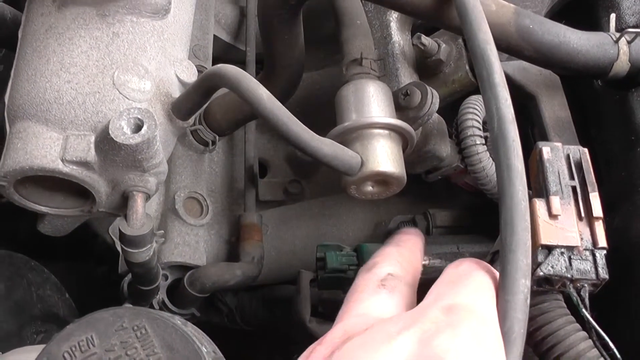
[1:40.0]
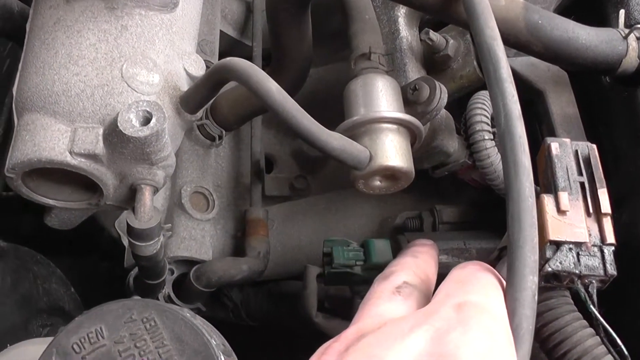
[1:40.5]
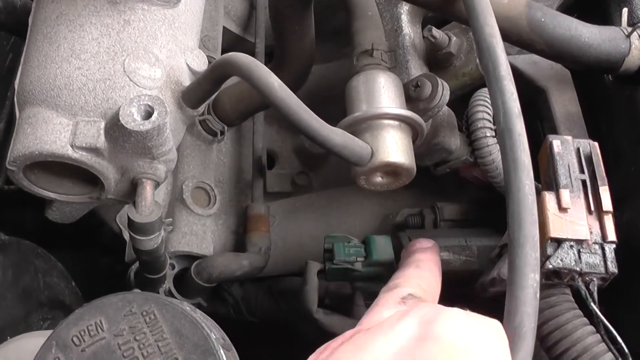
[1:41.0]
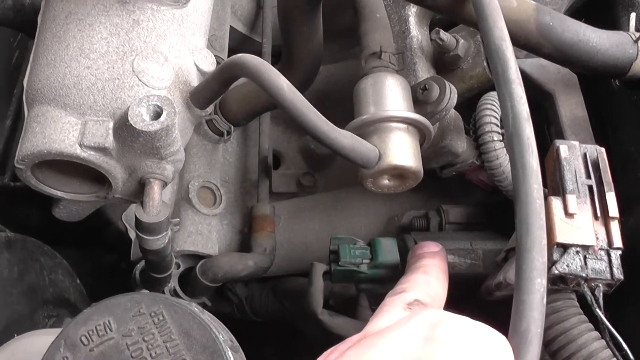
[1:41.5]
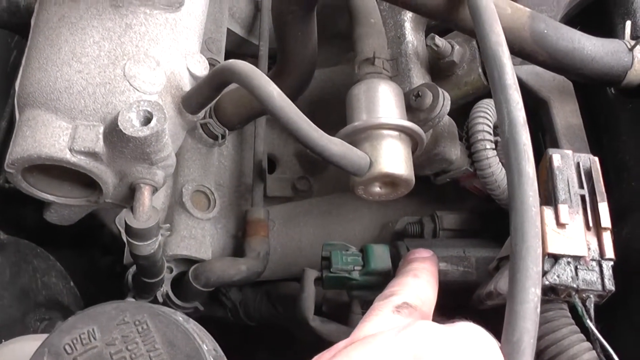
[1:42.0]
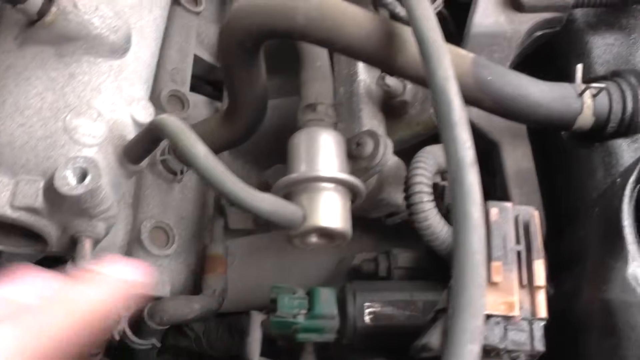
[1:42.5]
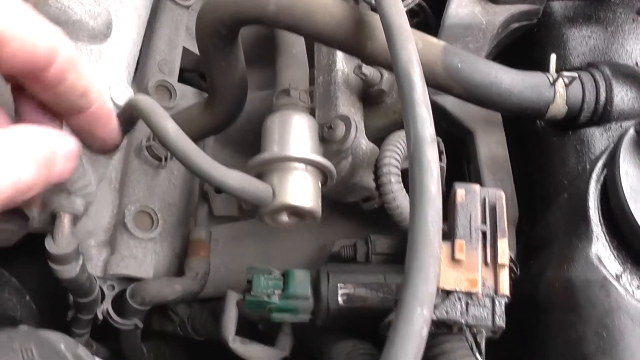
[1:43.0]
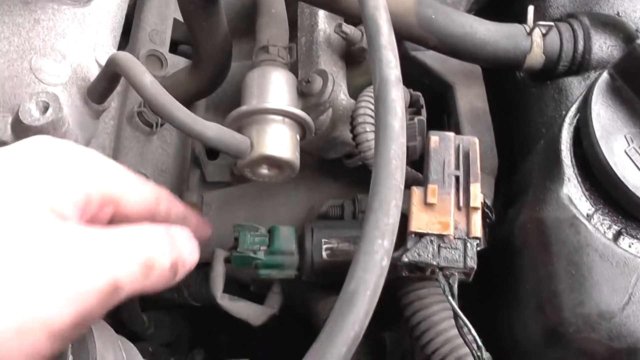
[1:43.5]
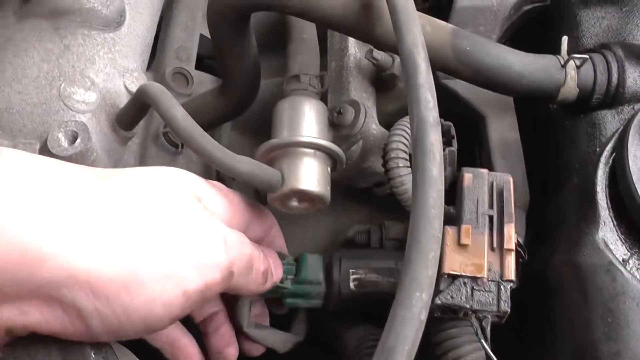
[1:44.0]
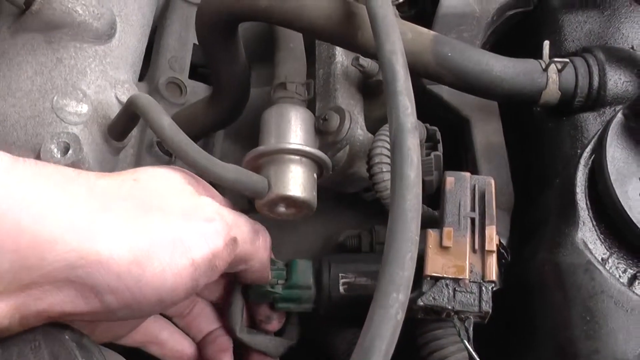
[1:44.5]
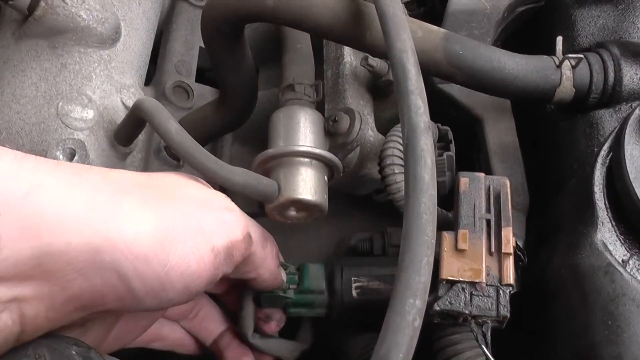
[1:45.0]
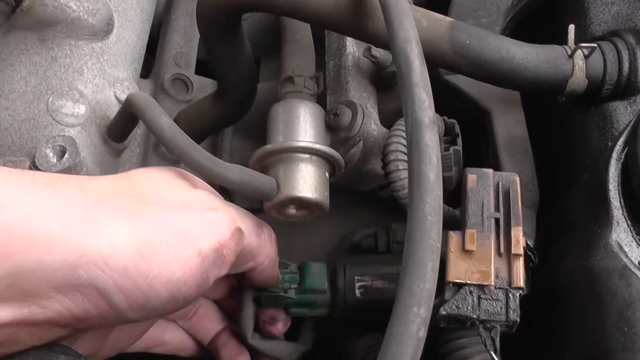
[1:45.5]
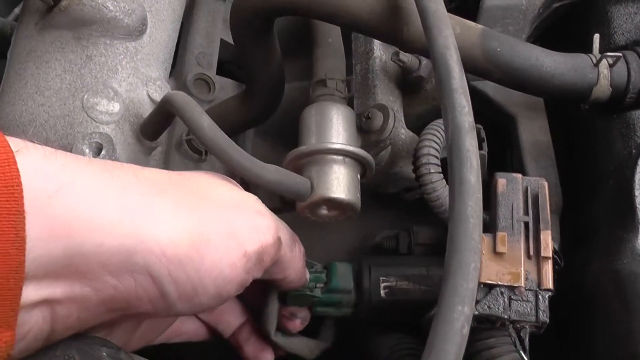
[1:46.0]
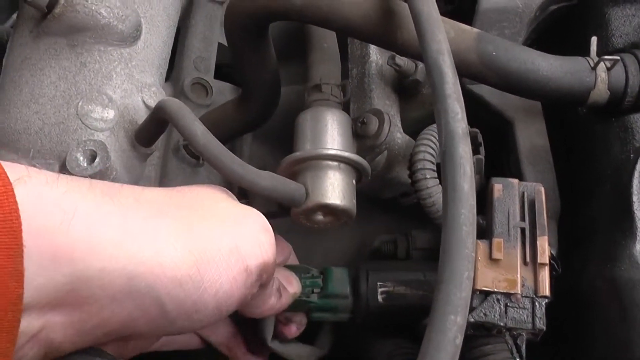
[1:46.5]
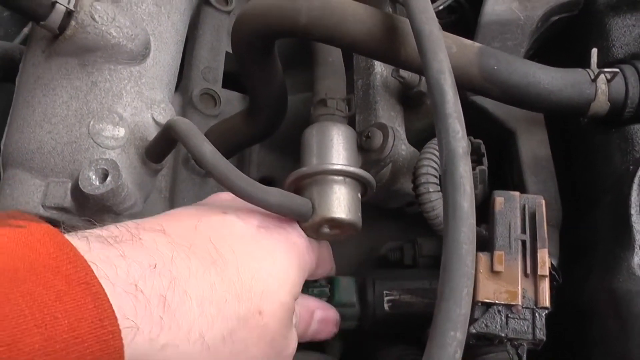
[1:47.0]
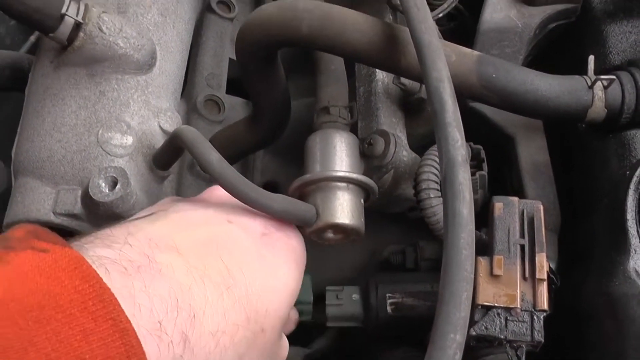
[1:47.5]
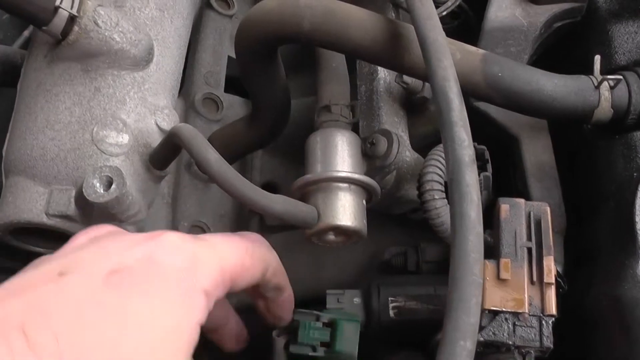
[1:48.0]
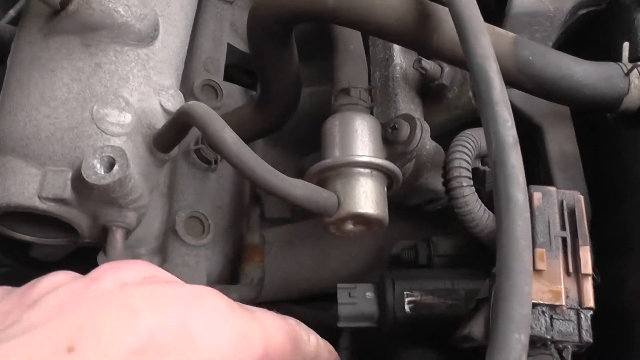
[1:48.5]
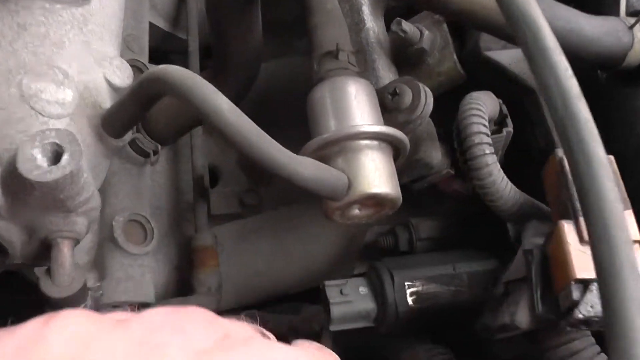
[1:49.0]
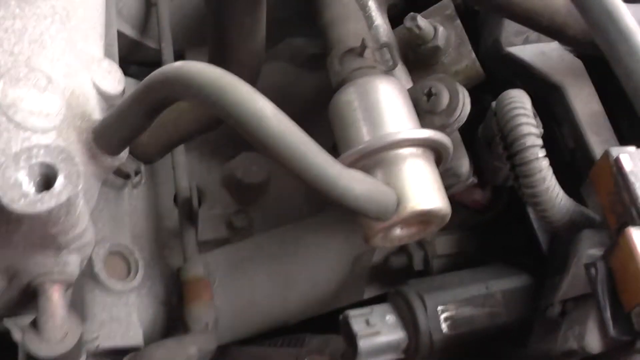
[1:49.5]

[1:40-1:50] Under the hood, the mechanic points his right index finger at the intake valve timing control solenoid valve, which appears to be a black part. He places his left hand on the green rubber portion of the valve, twists it with his left thumb and index finger, and pulls it straight off the solenoid valve. It is a green rubber tip, and he pulls his hand closer to the camera holding it in his fingertips. The camera zooms back in on the spot where he has just removed the cap.